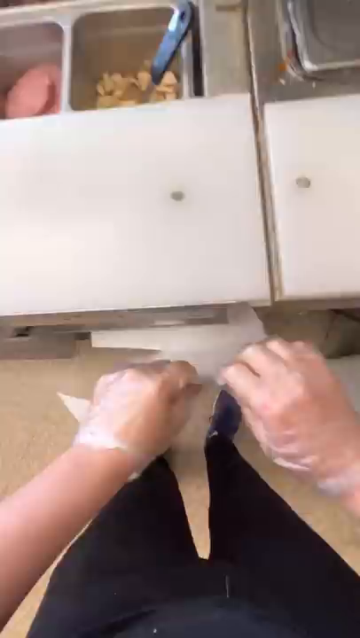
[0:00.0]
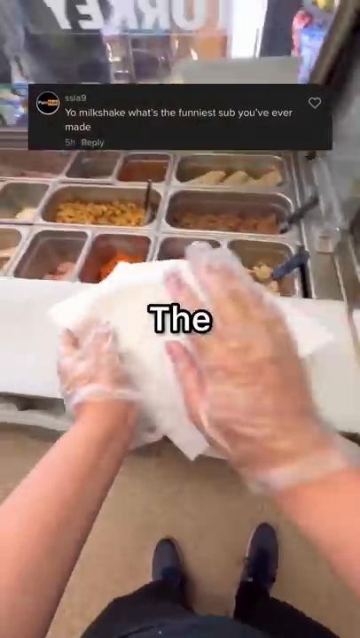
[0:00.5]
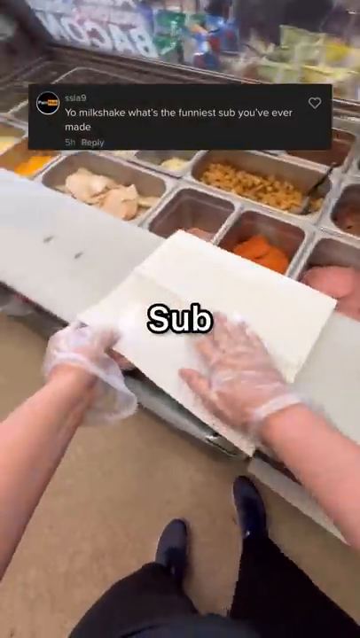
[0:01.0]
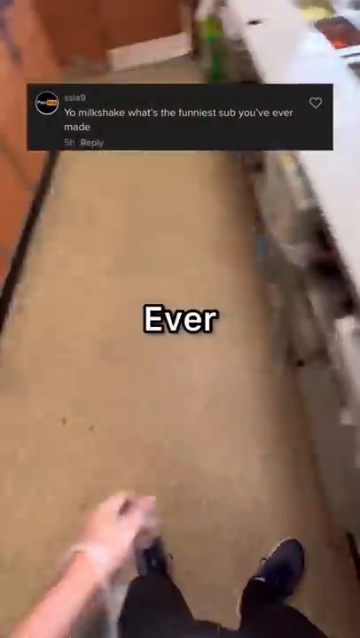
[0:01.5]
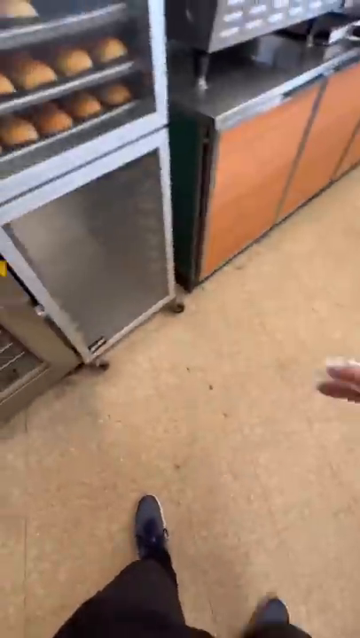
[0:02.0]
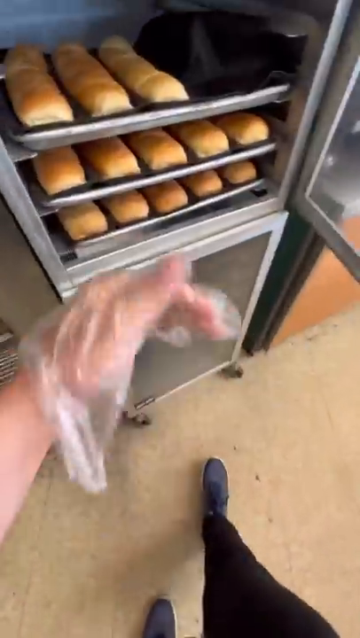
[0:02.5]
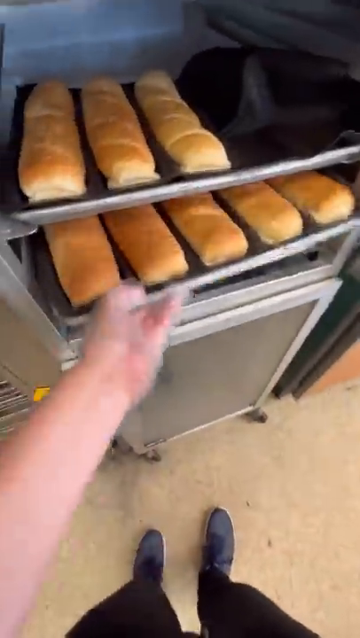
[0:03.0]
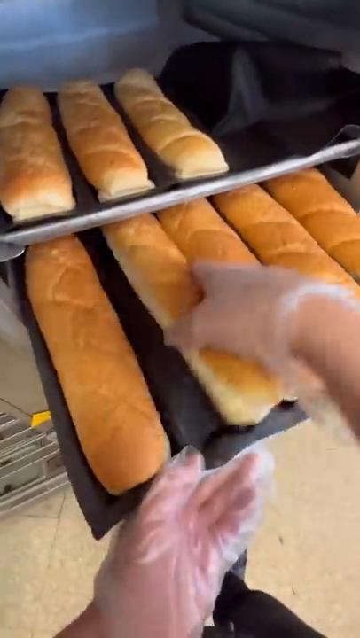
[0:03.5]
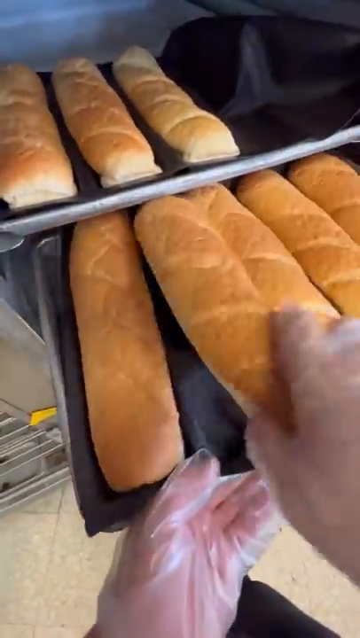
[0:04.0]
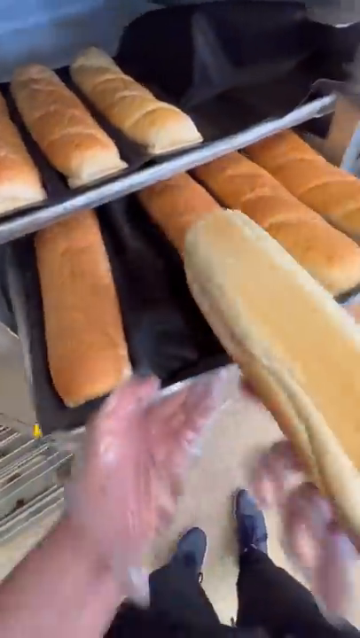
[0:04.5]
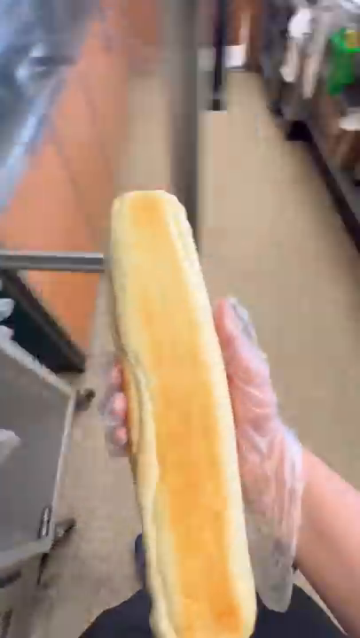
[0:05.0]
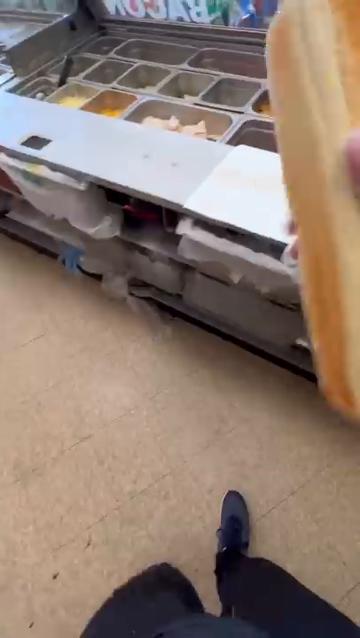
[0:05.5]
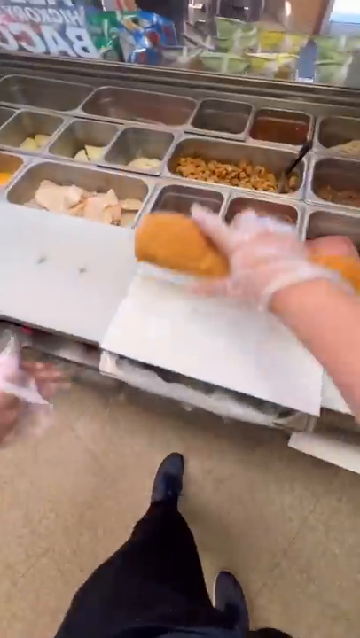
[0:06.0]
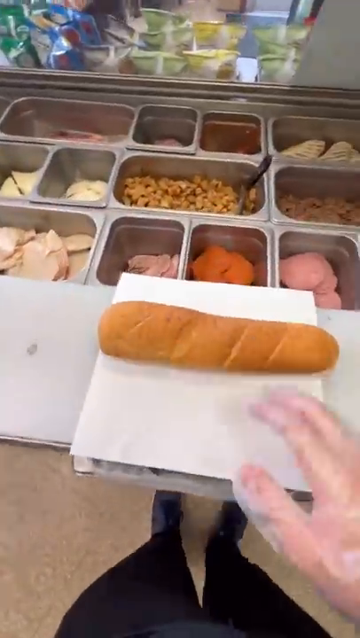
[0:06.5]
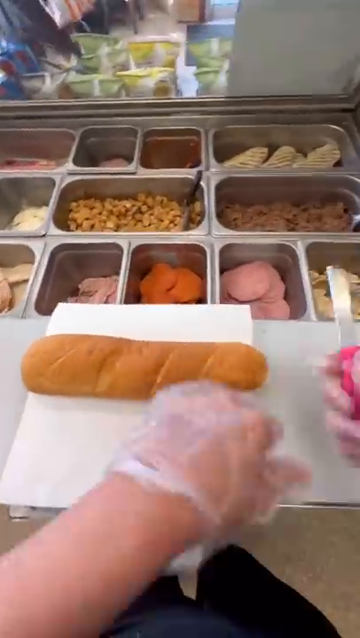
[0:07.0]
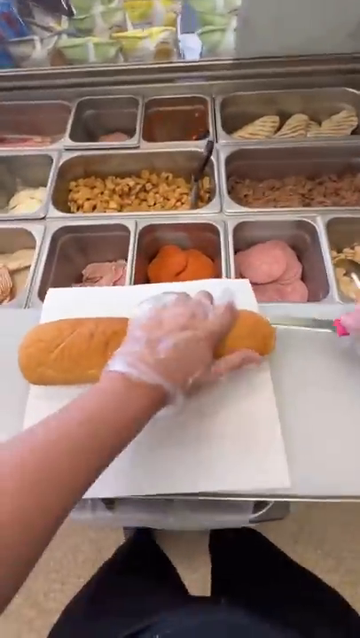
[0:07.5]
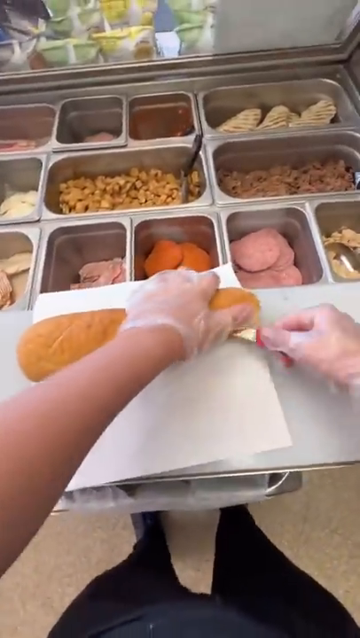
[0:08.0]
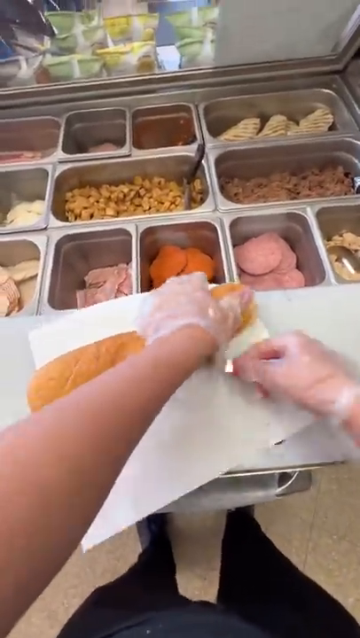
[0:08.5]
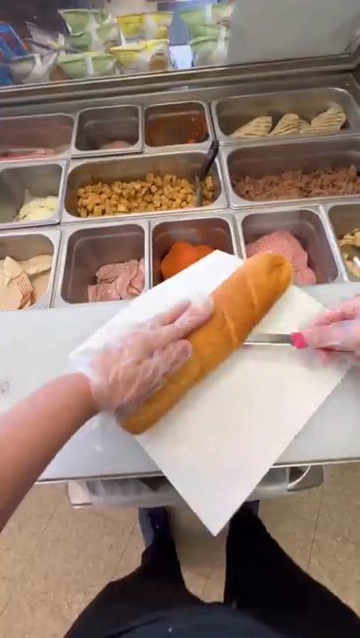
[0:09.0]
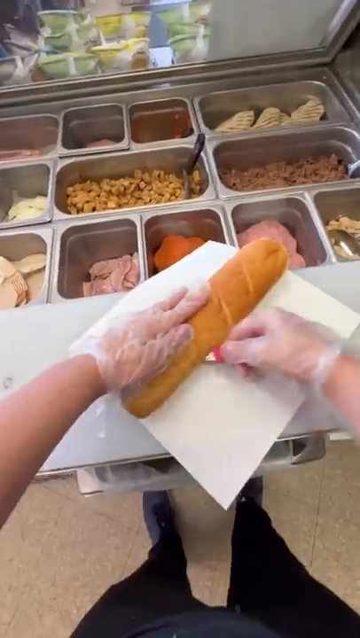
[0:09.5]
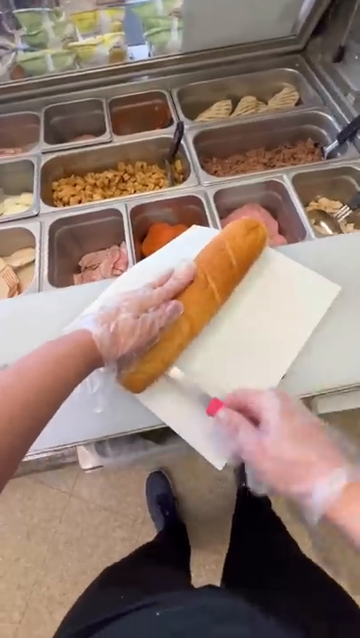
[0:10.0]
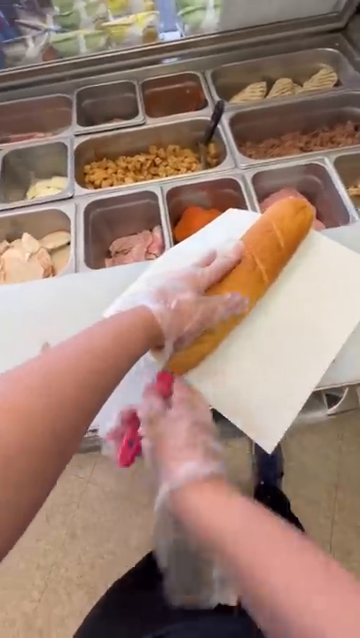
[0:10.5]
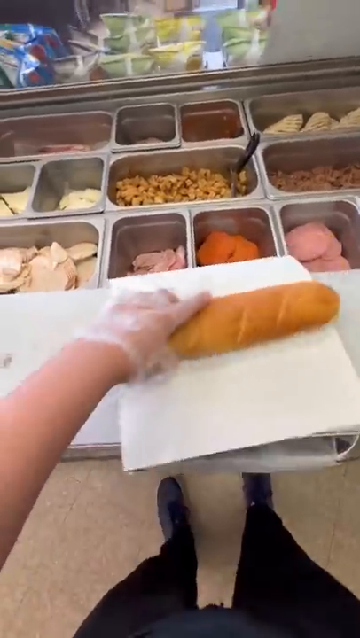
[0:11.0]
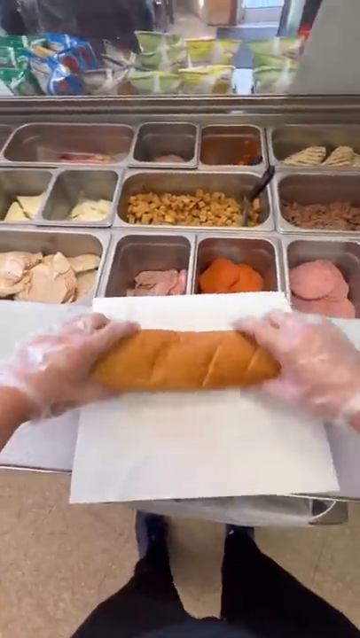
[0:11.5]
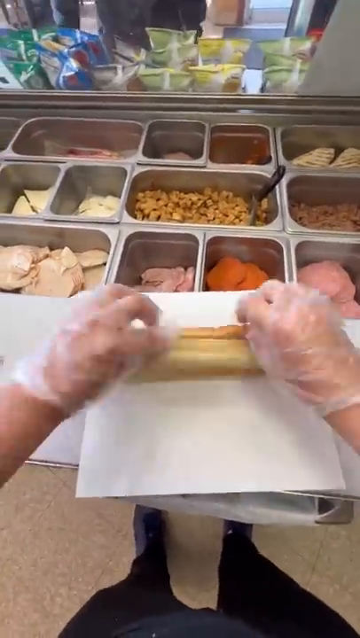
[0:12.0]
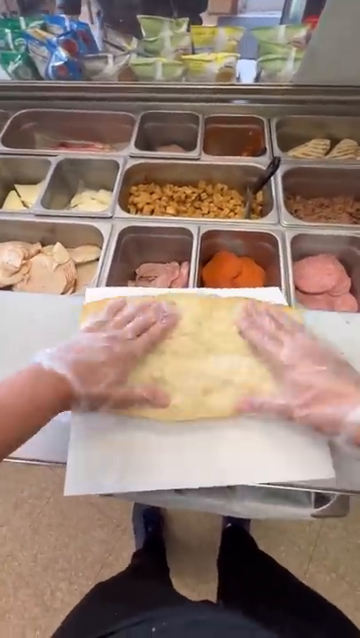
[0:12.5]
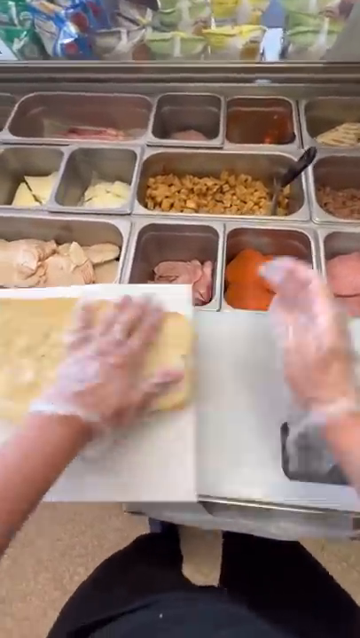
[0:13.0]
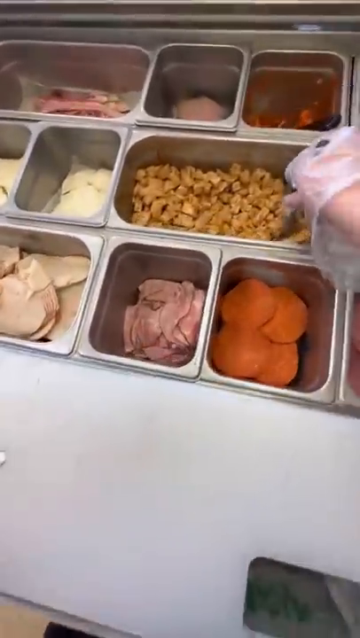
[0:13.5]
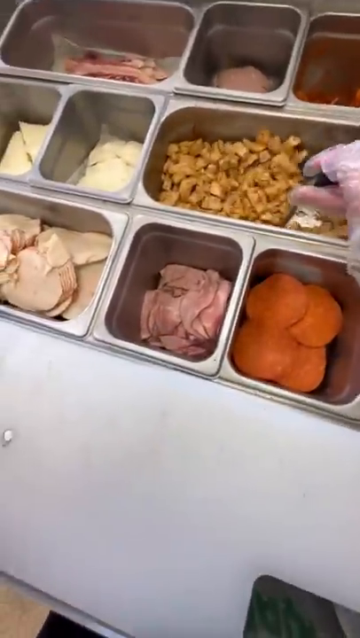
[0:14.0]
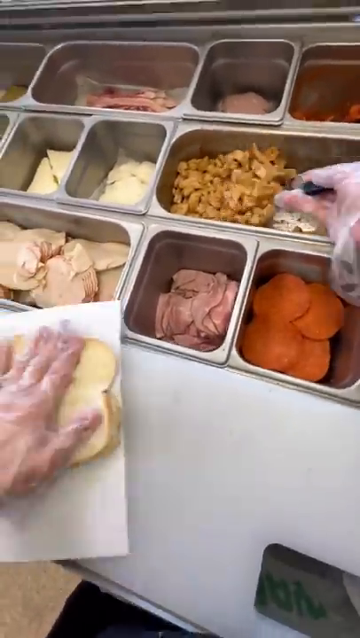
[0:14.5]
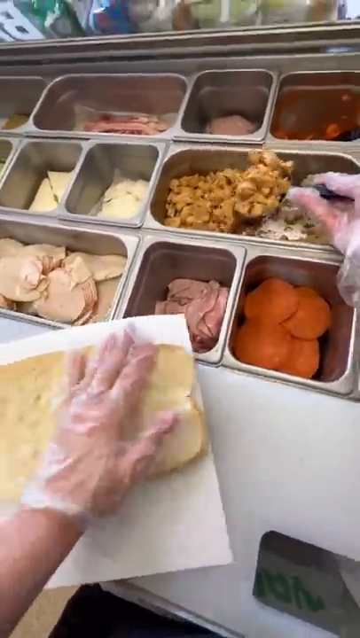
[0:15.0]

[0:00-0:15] The setting looks like a sub sandwich making location. When the video begins, what appears to be a question or comment, maybe from social media, is shown at the top of the frame, and then the words "what's the funniest sub you've ever made?" appear. A person grabs a foot-long sub piece of bread, cuts it open, and scoops something out of the case holding all the different ingredients. It is hard to tell what it is, but it looks like some kind of ground meat, maybe ground chicken or ground turkey, with a yellowish-brownish color, and it is scooped into the sub. The other ingredients are visible laying in the other sections of the case.